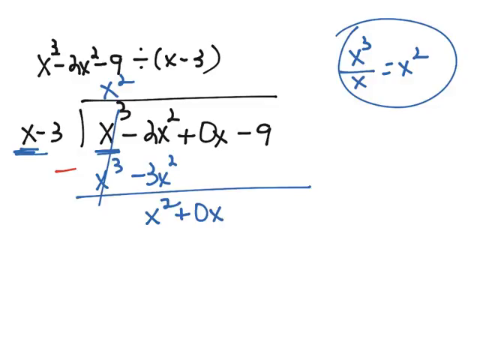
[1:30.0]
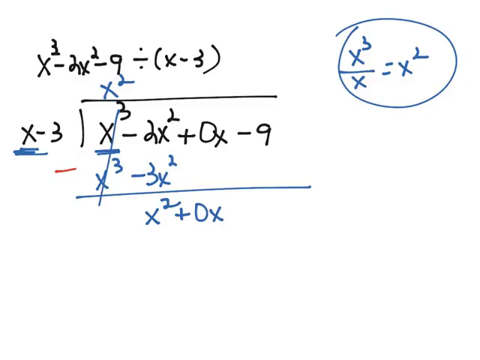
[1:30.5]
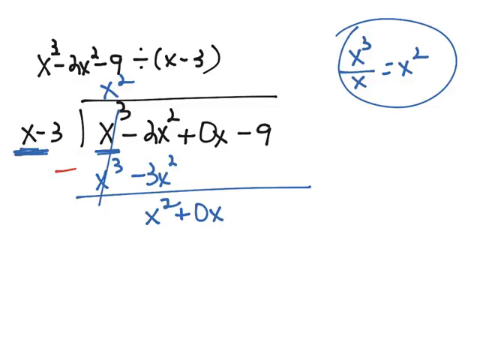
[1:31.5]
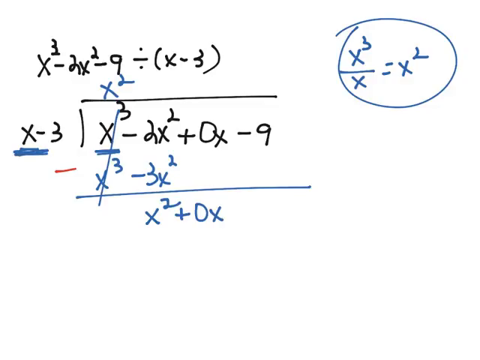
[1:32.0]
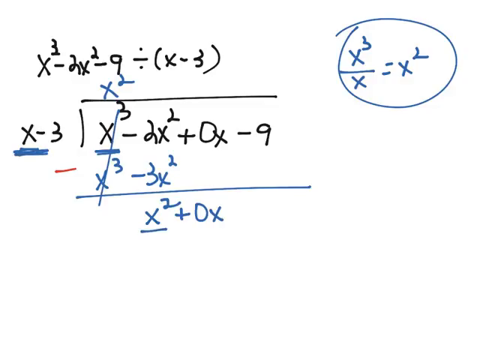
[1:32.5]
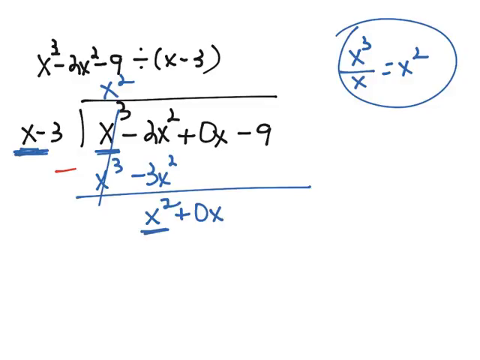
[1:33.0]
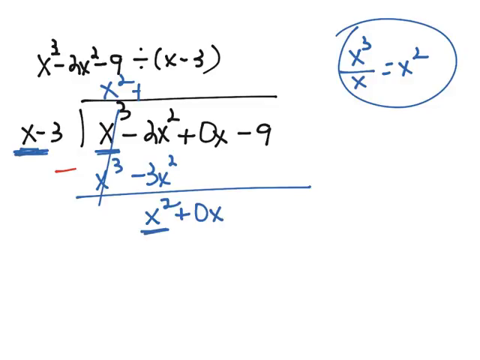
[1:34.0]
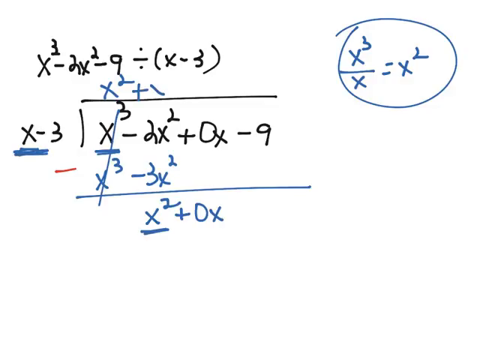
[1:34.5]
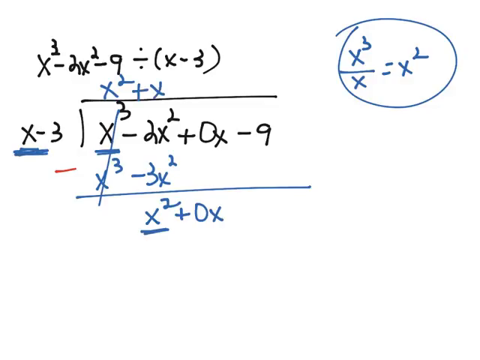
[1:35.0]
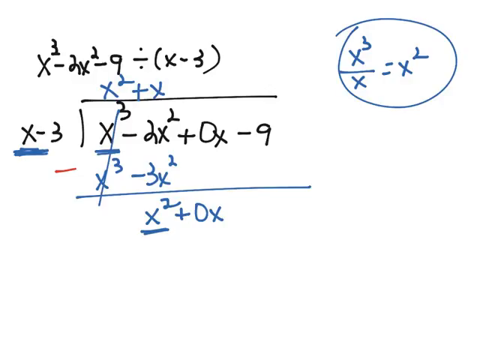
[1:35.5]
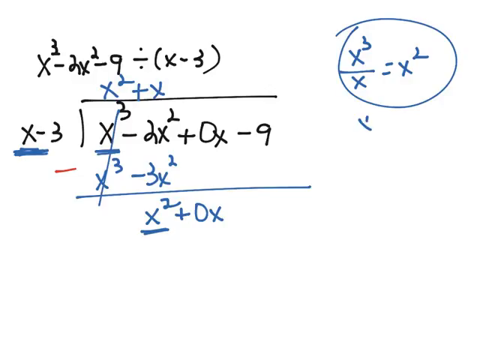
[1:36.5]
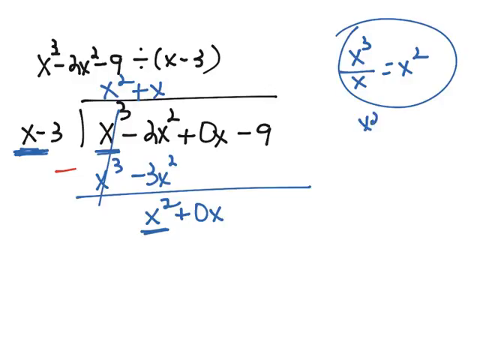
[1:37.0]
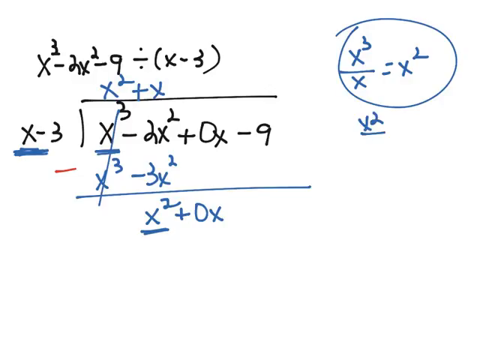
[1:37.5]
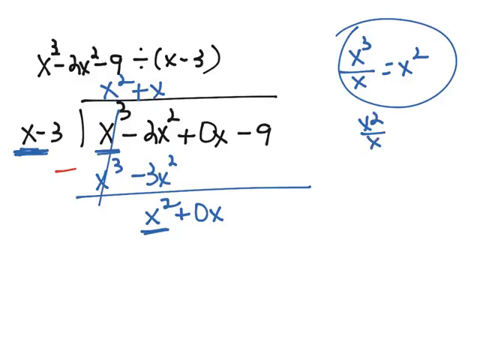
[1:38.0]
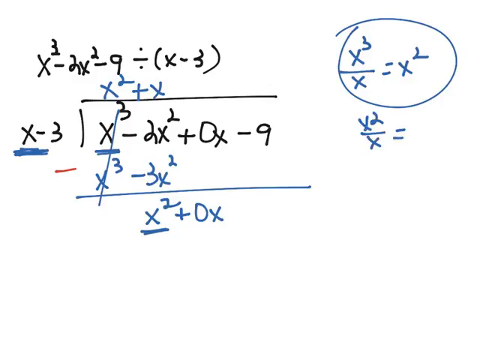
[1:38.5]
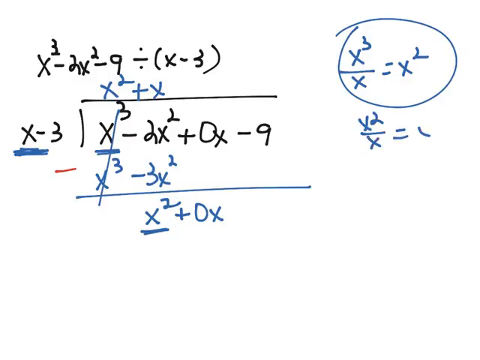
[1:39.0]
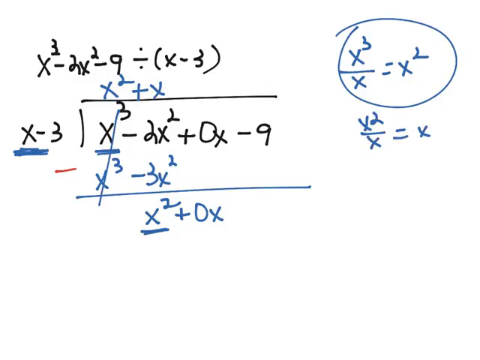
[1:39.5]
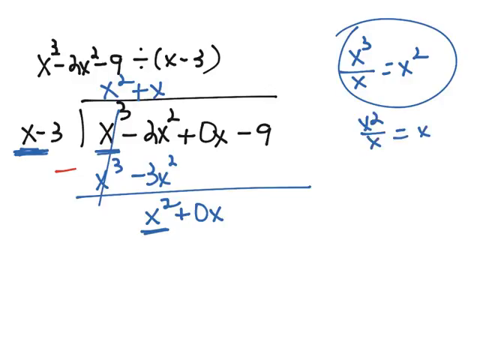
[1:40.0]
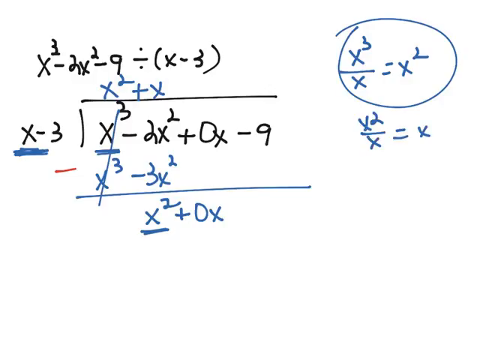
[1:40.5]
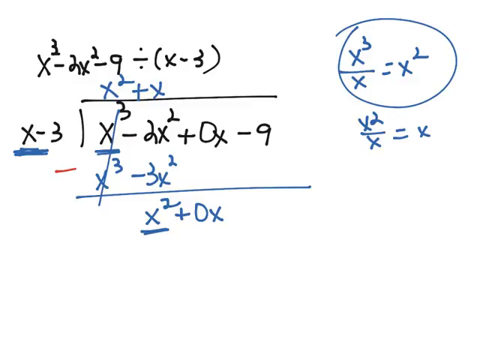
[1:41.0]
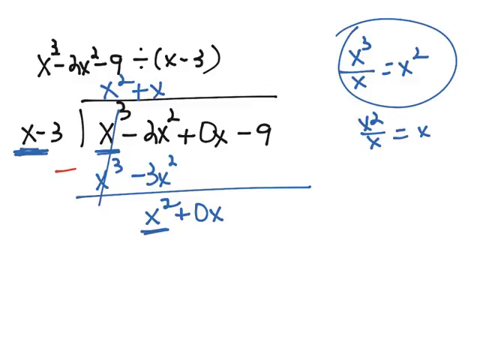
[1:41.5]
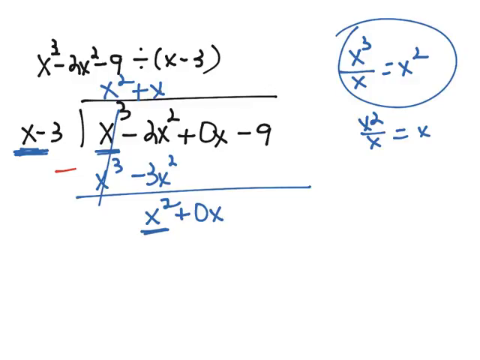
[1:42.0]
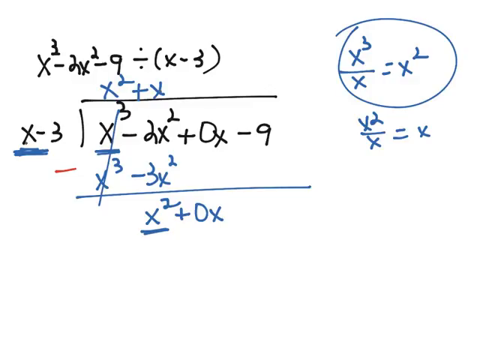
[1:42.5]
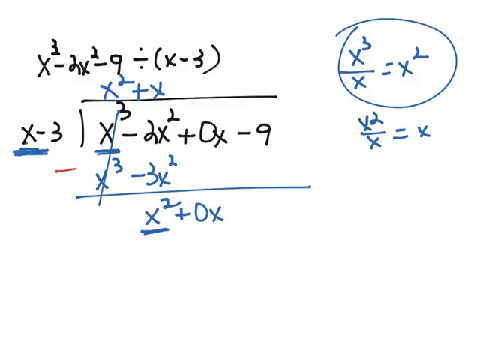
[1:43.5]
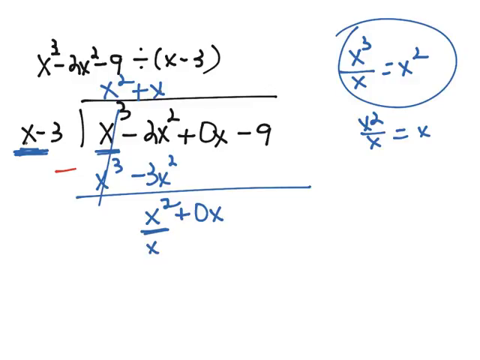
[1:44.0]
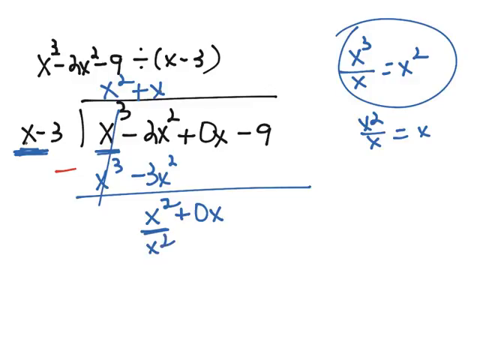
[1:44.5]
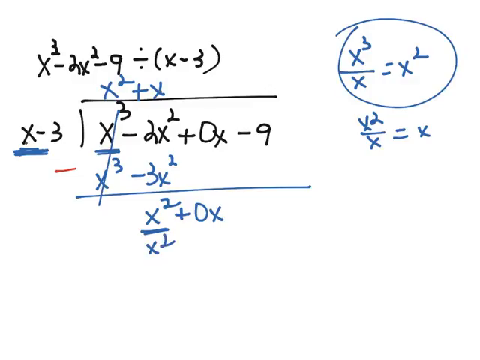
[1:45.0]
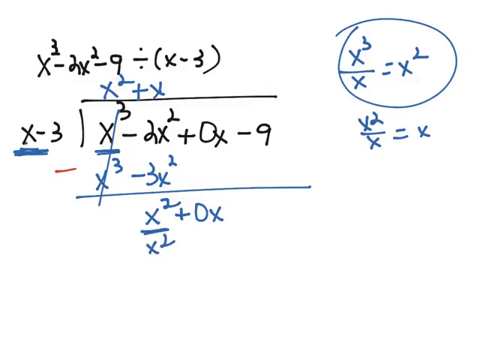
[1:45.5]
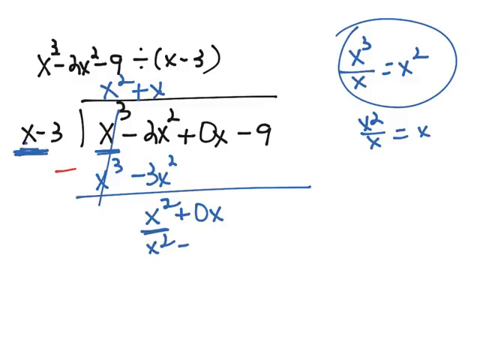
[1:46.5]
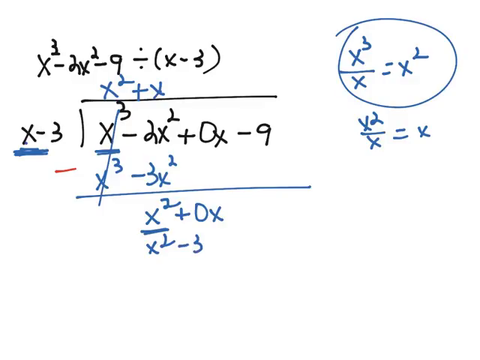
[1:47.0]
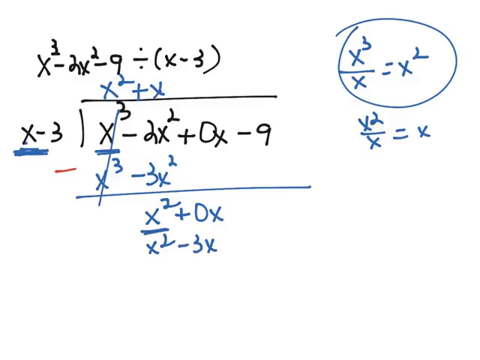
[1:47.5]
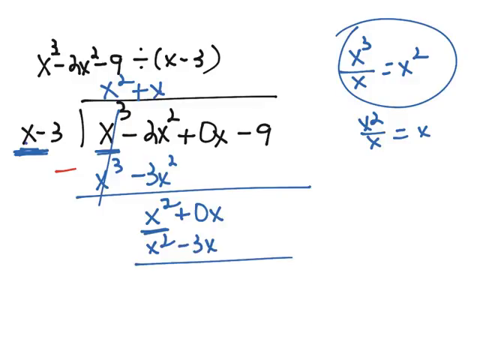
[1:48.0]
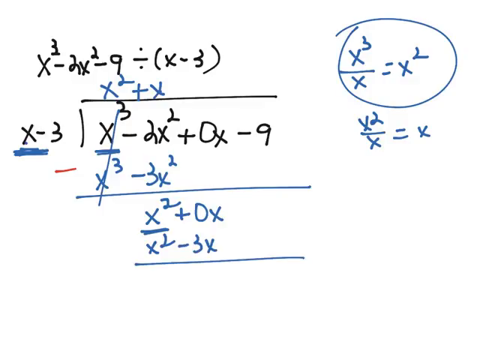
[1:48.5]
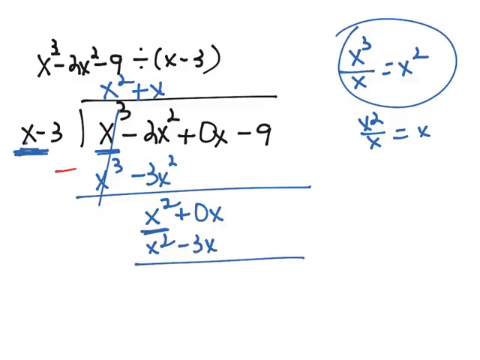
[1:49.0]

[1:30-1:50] The same math equation to be solved, x³ − 2x² − 9 divided by (x − 3), is on screen, with x³ − 2x² + 0x − 9 divided by x − 3 below it, and x³ − 3x² shown divided by x² + 0x. Then x² + x is written at the top of the division, and on the far right side of the screen, x² ÷ x = x is written out. Next, x² is shown divided by x² − 3x.